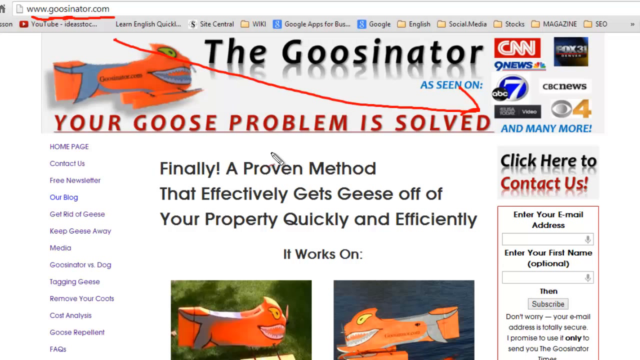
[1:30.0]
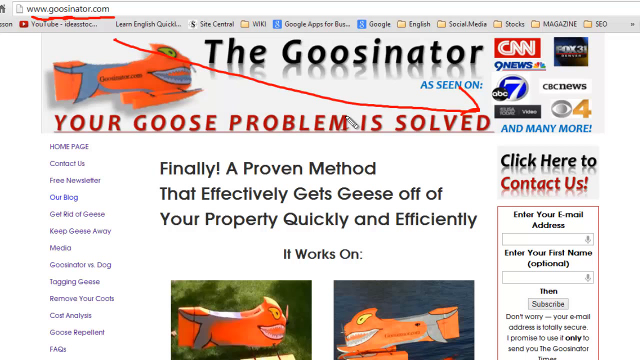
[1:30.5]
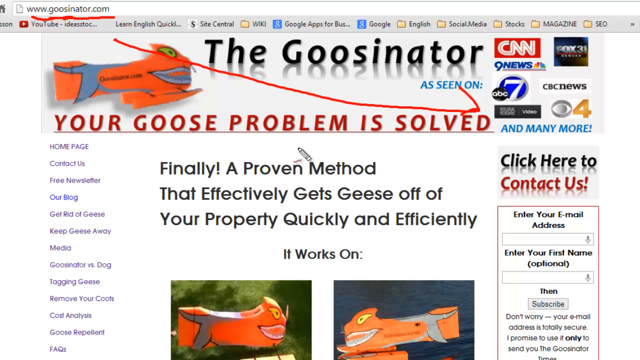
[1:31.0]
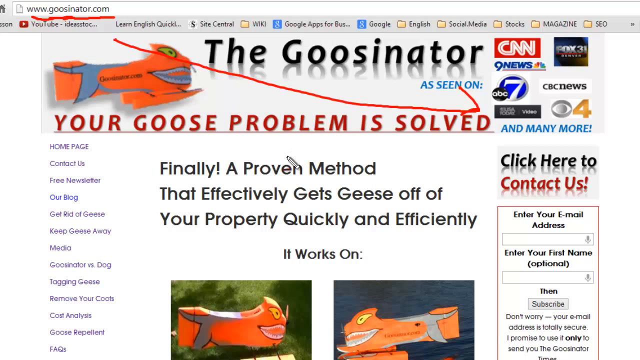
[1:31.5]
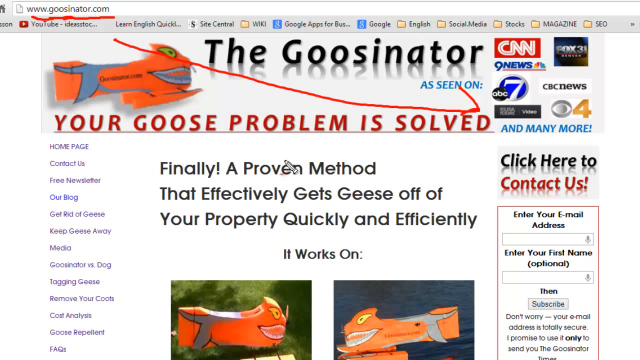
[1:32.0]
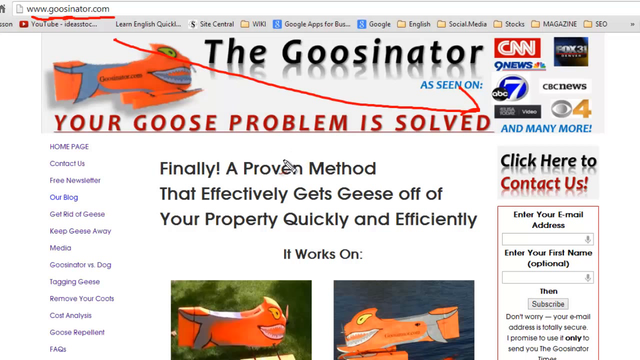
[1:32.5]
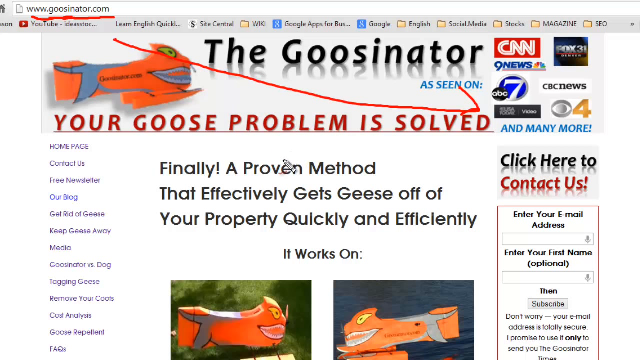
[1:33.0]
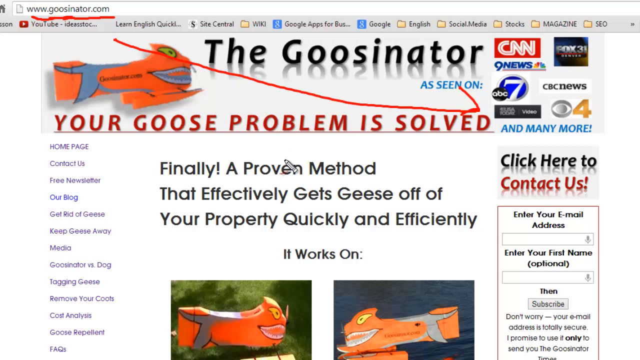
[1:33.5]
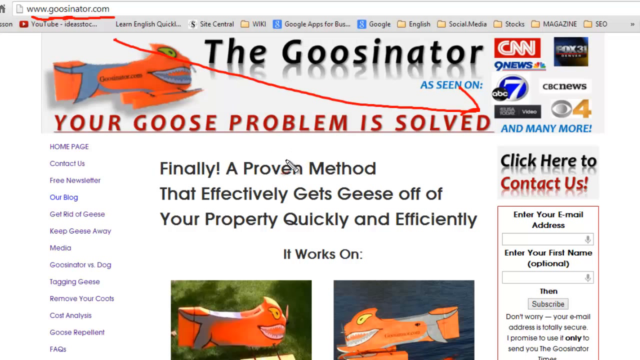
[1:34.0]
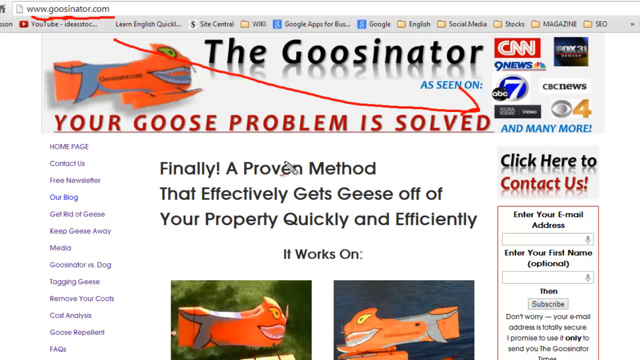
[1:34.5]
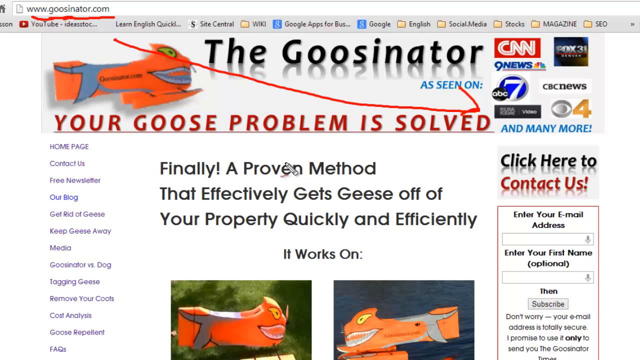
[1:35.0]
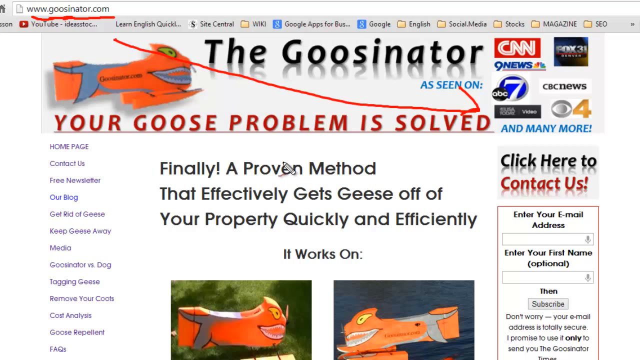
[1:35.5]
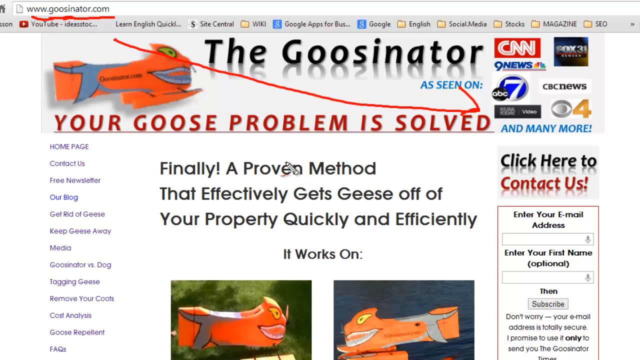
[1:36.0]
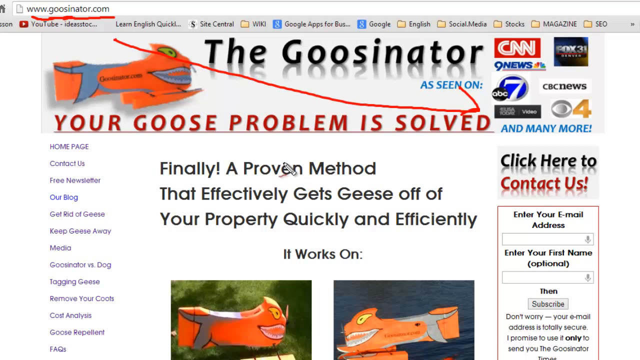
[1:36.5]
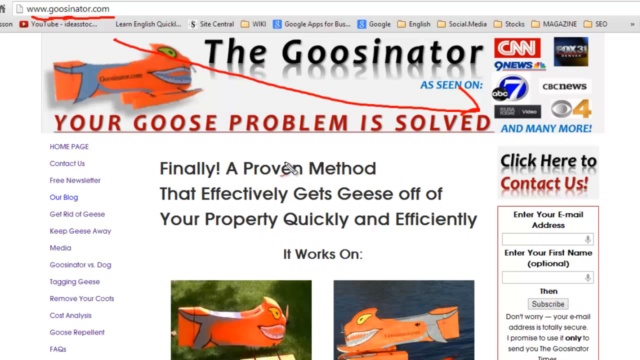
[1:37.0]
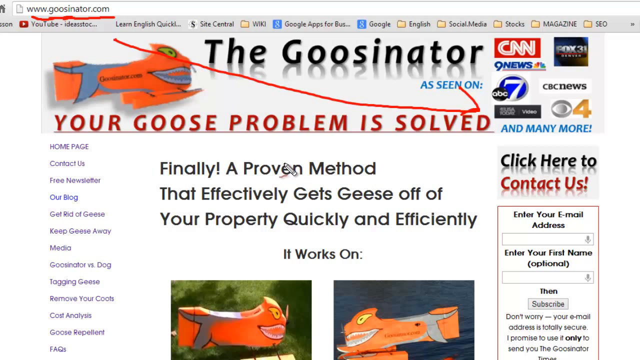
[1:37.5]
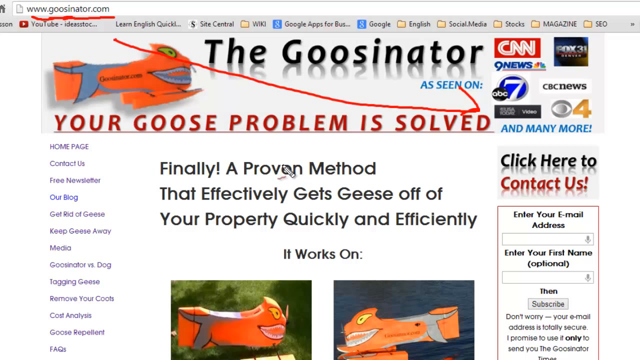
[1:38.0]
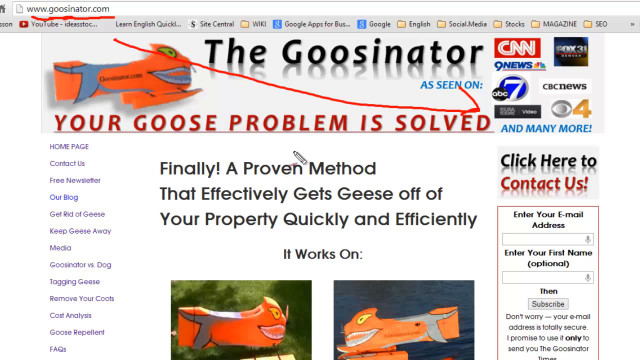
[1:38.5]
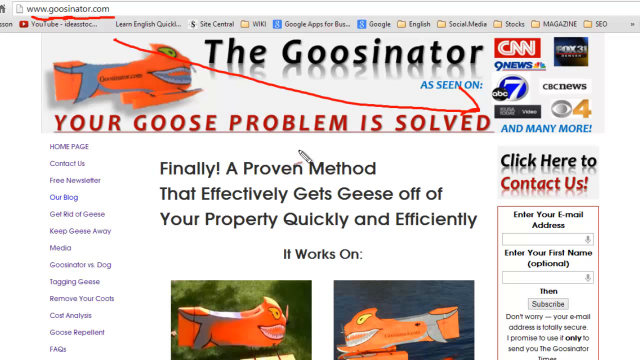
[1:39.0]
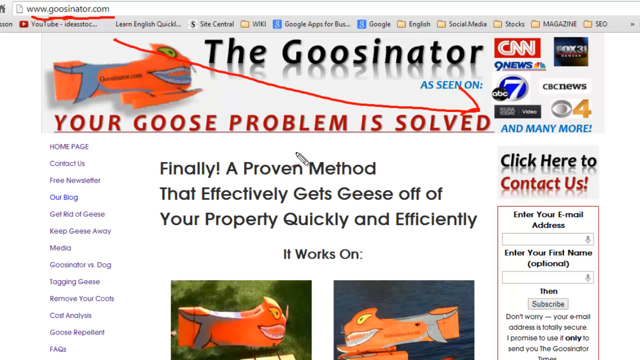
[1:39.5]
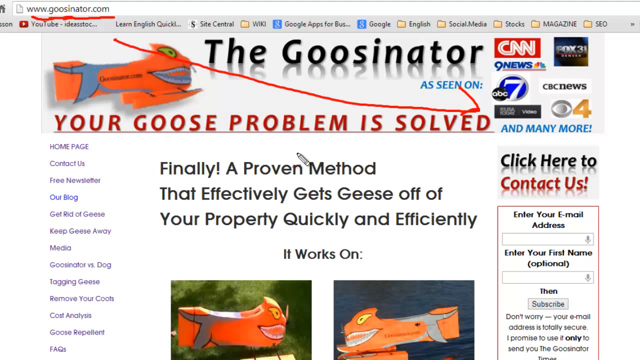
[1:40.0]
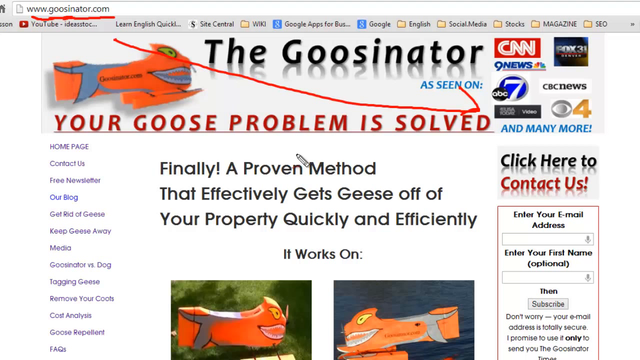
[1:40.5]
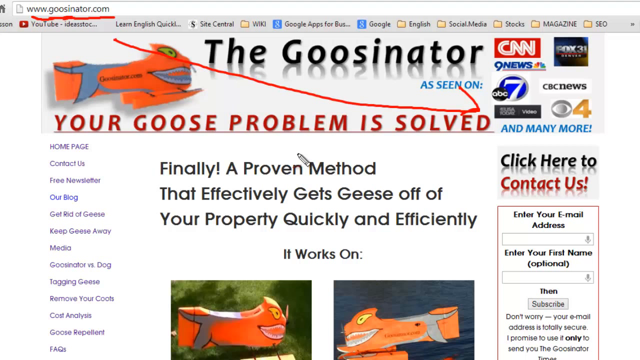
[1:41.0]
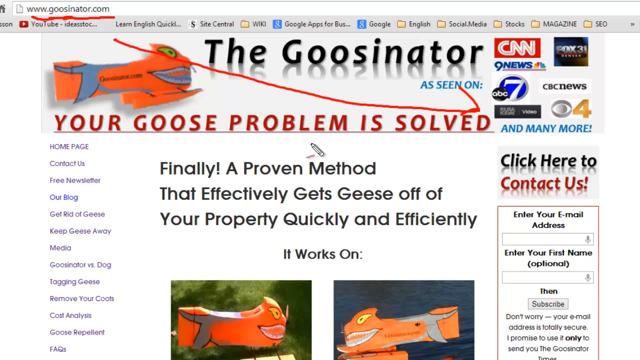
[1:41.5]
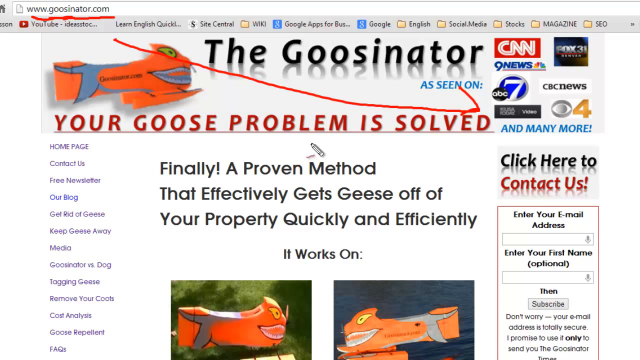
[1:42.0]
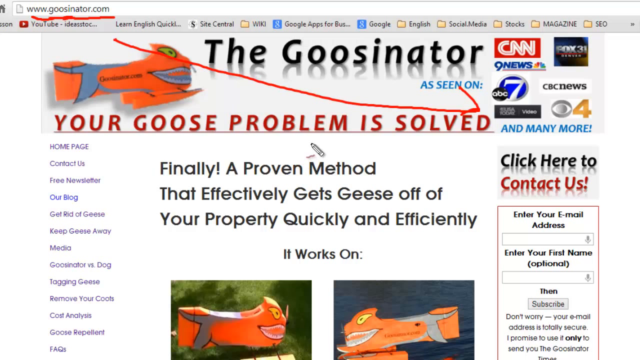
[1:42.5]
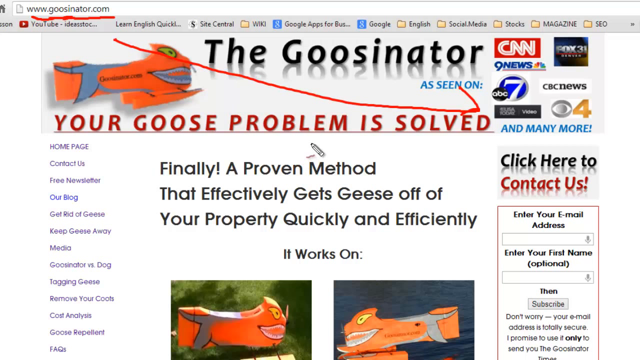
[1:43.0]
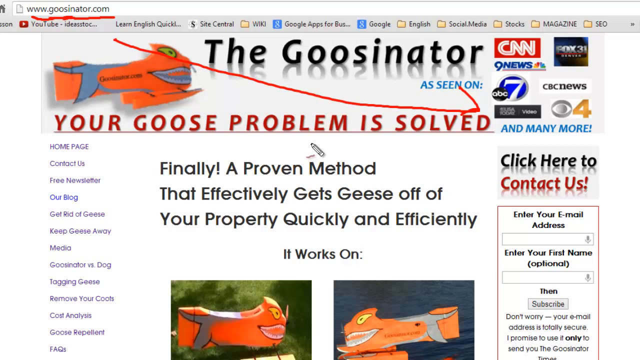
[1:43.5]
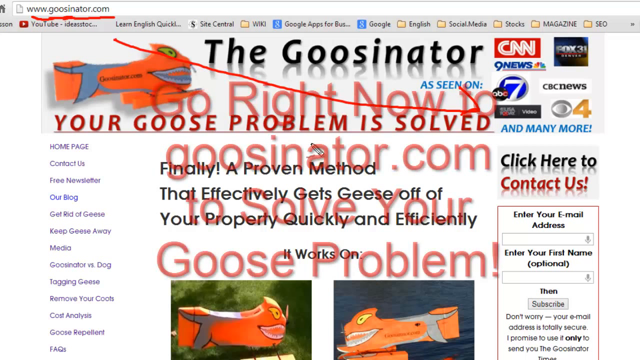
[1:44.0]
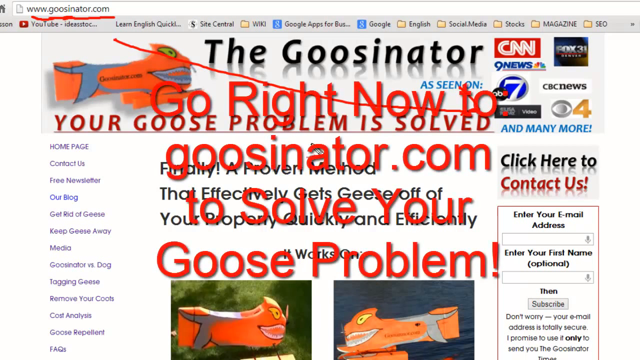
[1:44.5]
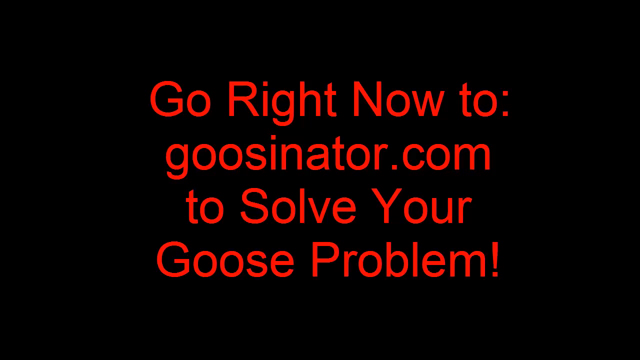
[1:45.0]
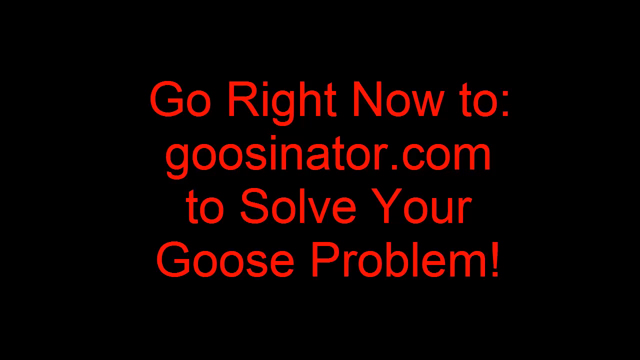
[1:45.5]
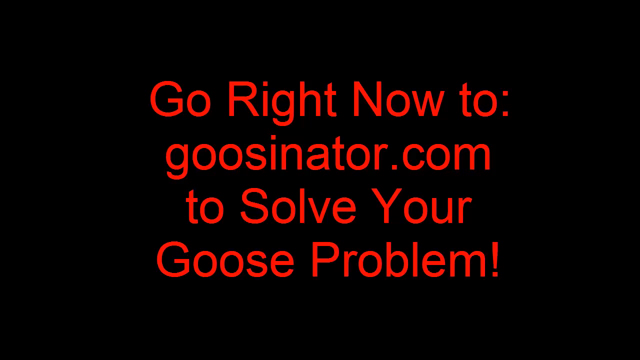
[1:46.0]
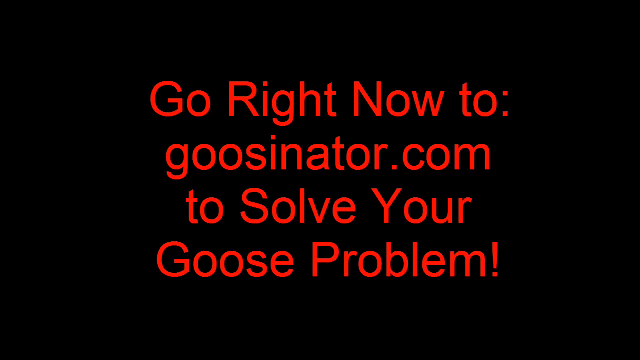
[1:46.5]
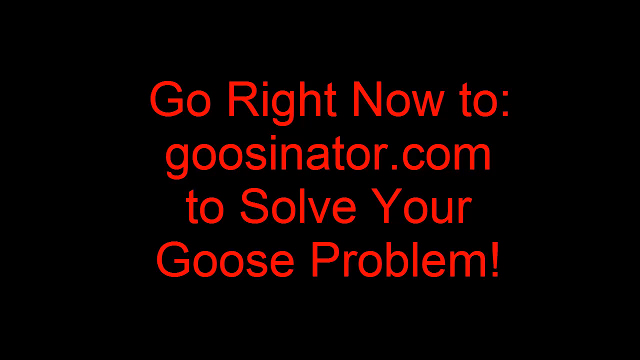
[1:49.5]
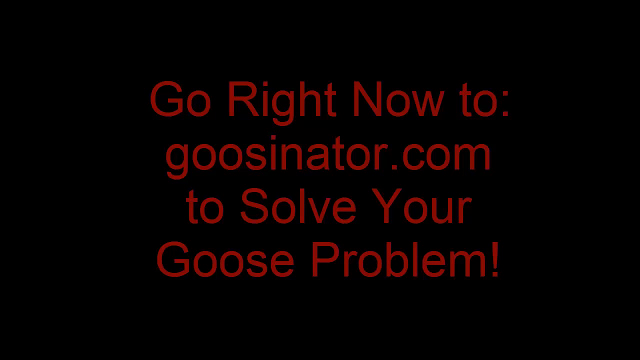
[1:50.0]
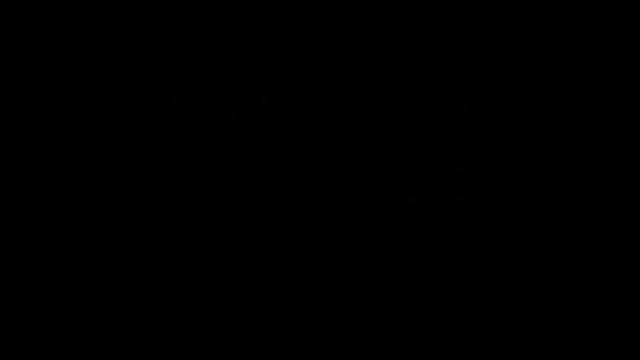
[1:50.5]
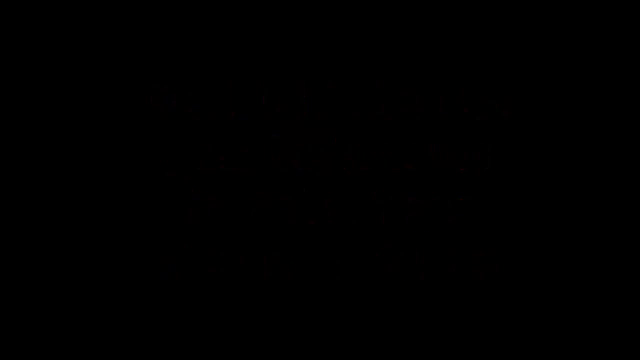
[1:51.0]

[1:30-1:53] A pen icon hovers around the text "Proven" on The Goosinator homepage, which has a lot of text. In the top right corner is a cluster of popular TV channel logos, and around the top left corner is an animated image of possibly a goose. Around the centre of the screen is the text "Finally! A proven method that effectively gets geese off of your property quickly and efficiently", followed by the phrase "It works on" above two images of what are possibly animated geese, side by side. A long arrow goes from the website's address bar to a section with a cluster of popular TV channels such as CNN, CNBC and ABC. Then the text "Go right now to: goosinator.com to solve your goose problem!" appears in red on a black background, and the video cuts to black.